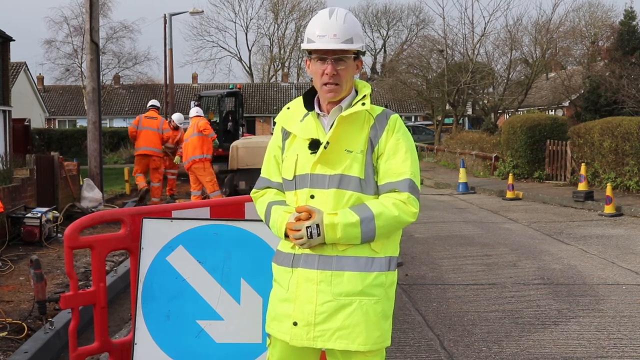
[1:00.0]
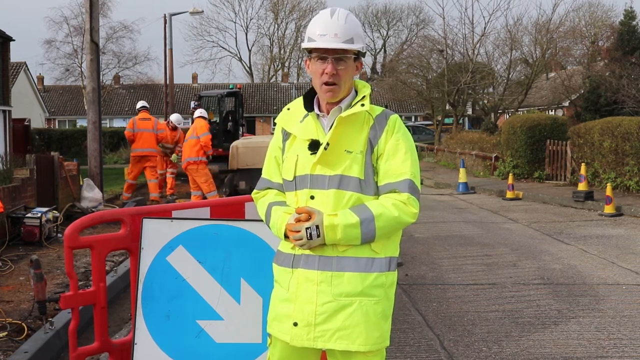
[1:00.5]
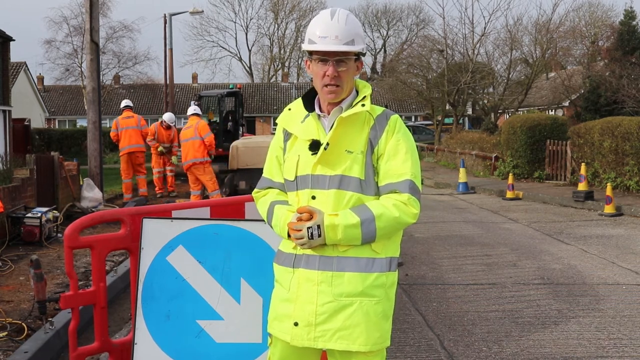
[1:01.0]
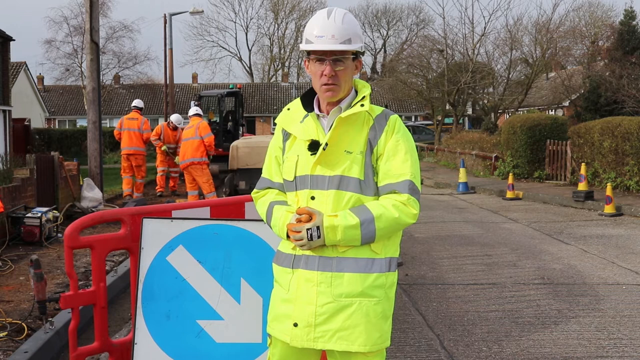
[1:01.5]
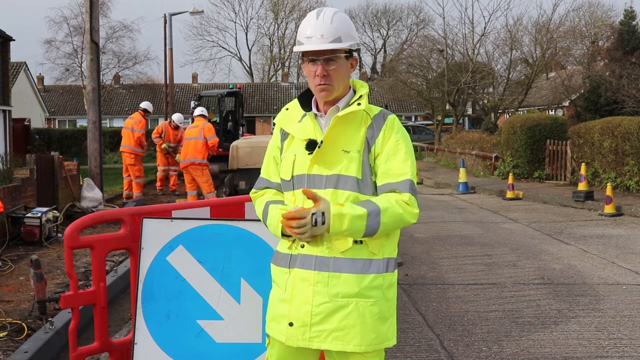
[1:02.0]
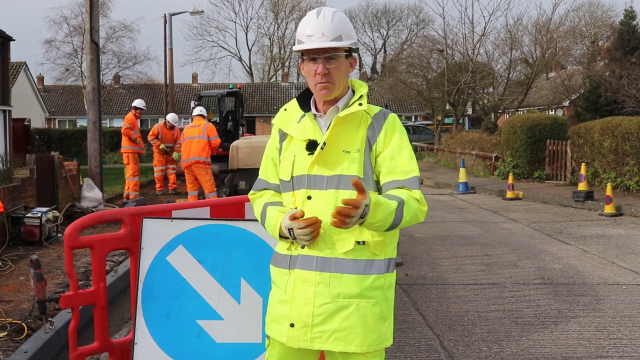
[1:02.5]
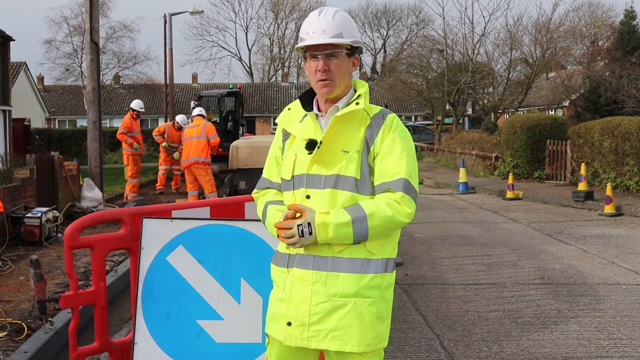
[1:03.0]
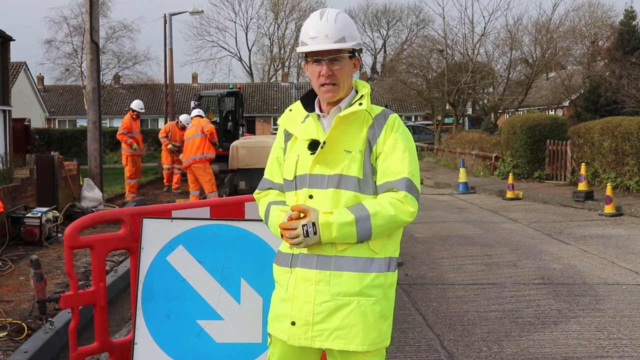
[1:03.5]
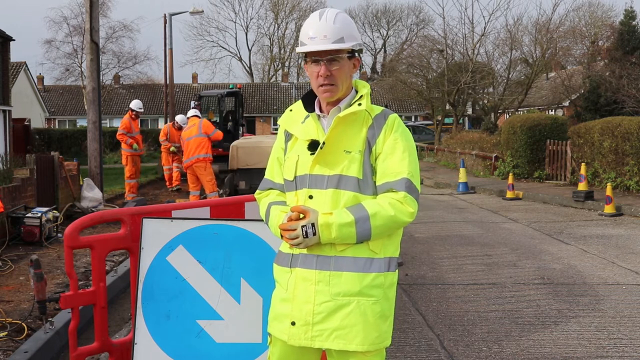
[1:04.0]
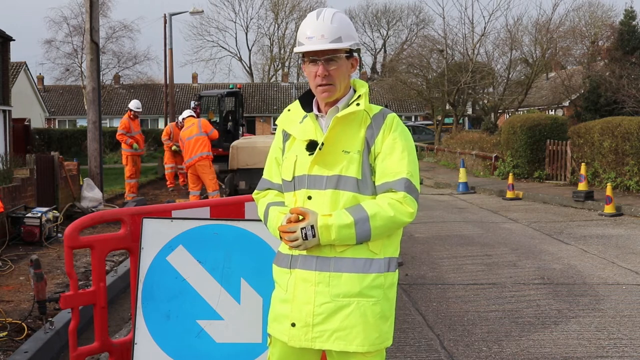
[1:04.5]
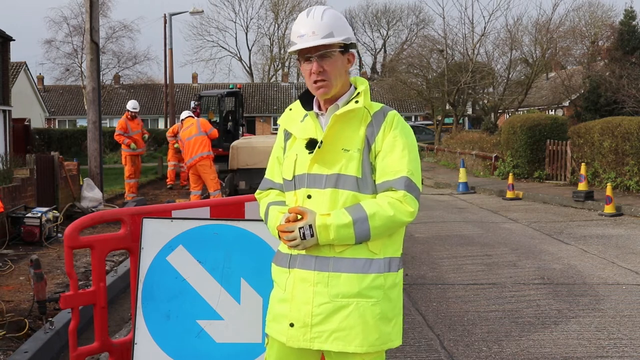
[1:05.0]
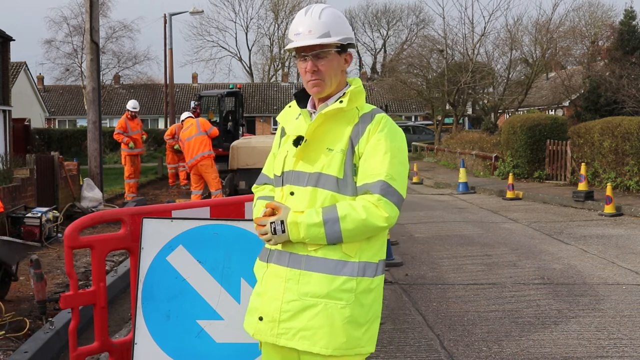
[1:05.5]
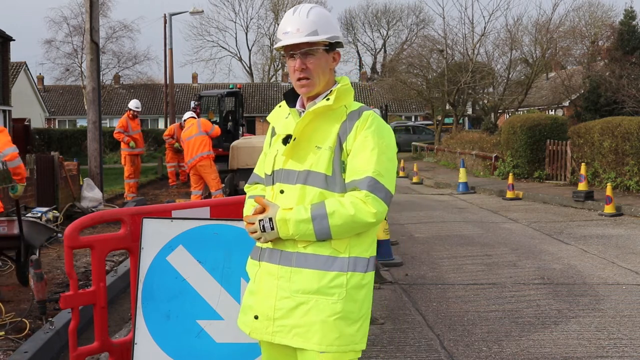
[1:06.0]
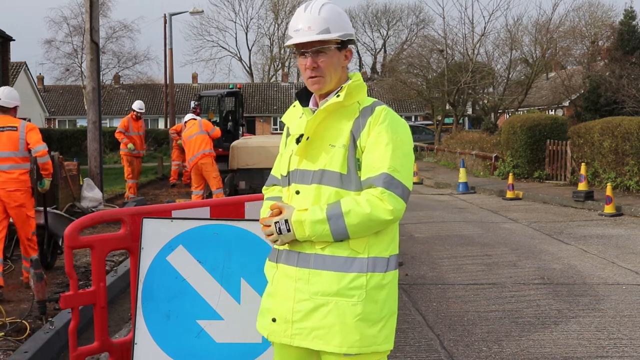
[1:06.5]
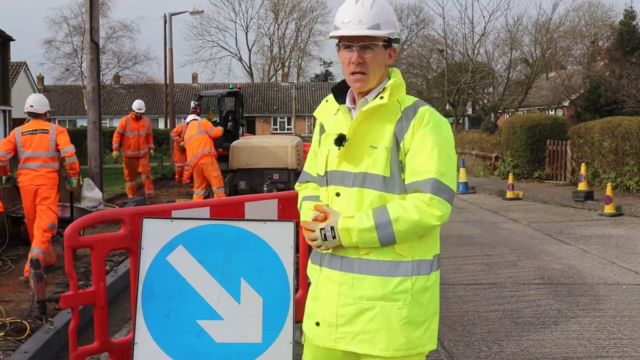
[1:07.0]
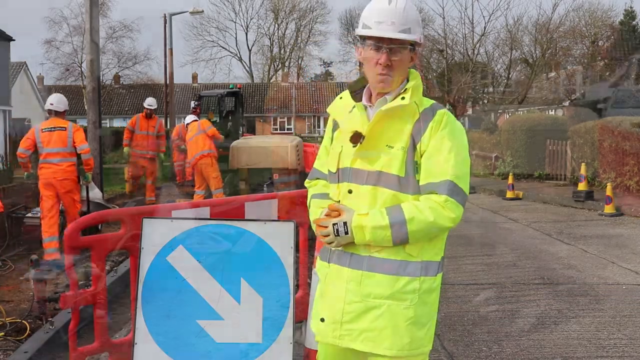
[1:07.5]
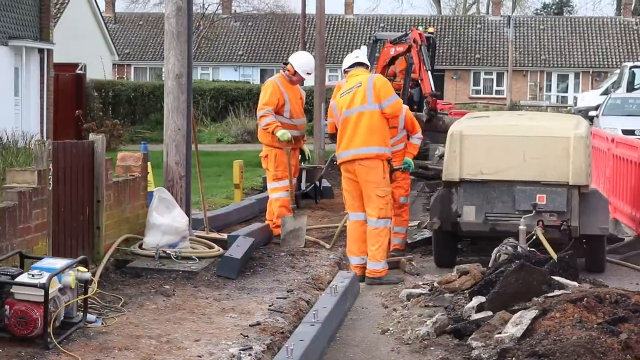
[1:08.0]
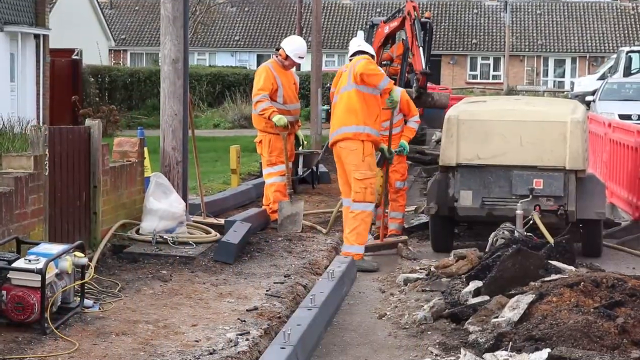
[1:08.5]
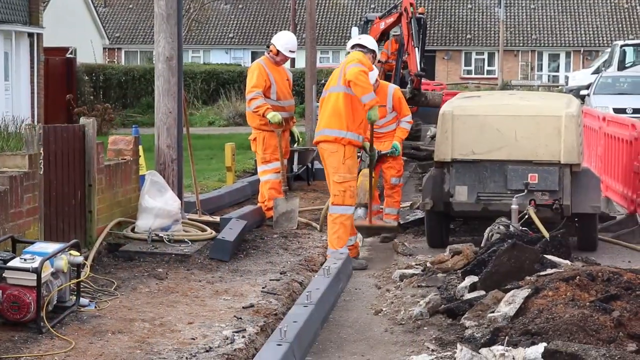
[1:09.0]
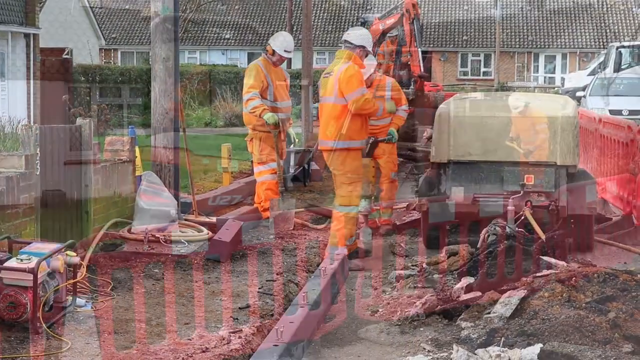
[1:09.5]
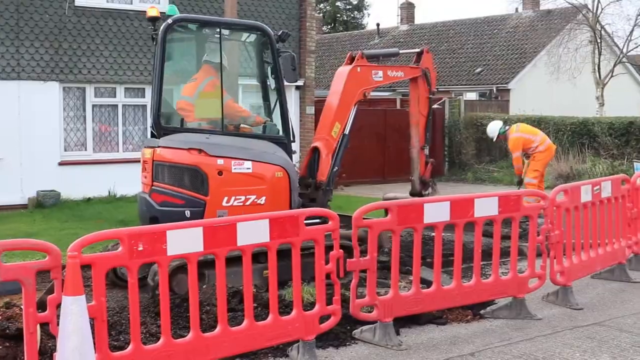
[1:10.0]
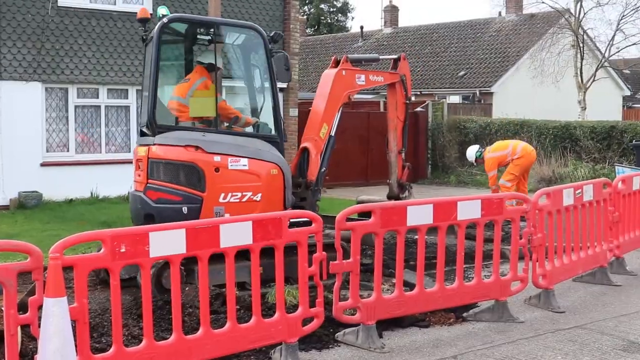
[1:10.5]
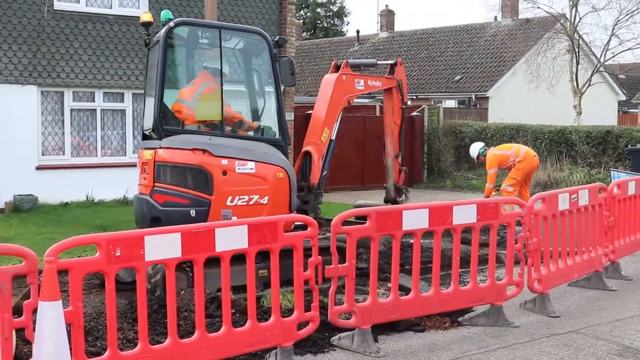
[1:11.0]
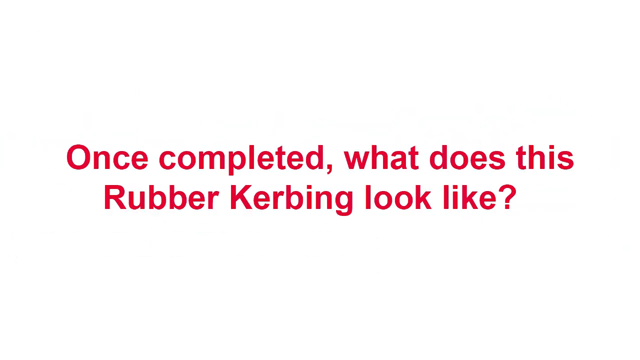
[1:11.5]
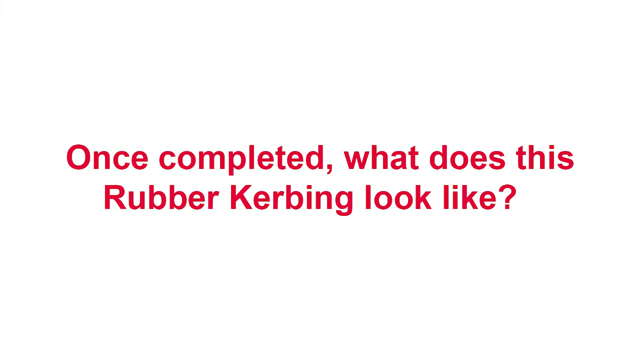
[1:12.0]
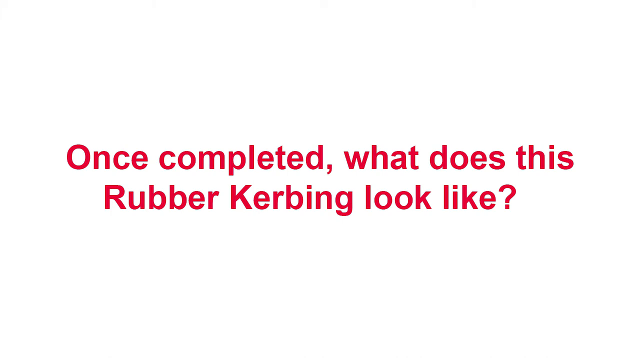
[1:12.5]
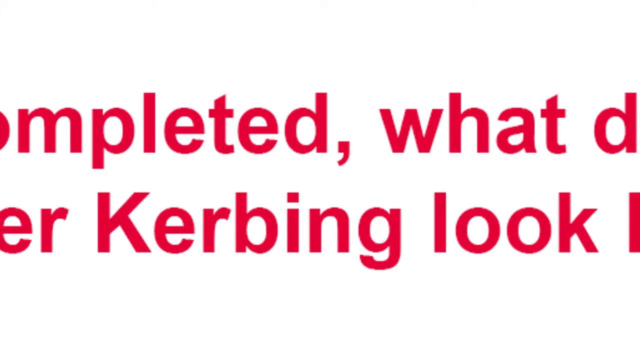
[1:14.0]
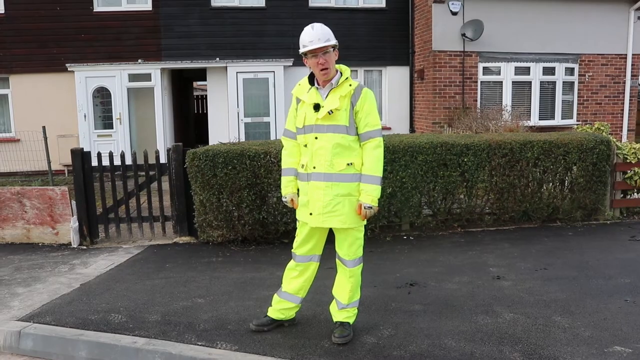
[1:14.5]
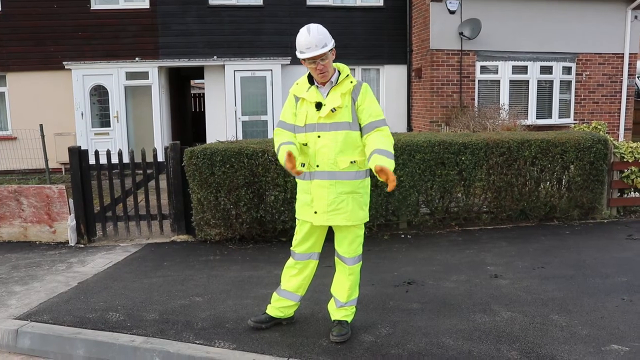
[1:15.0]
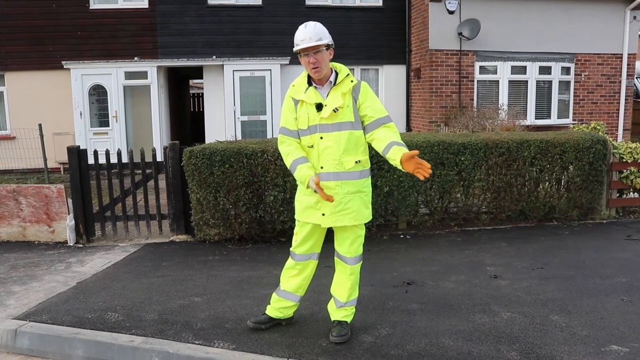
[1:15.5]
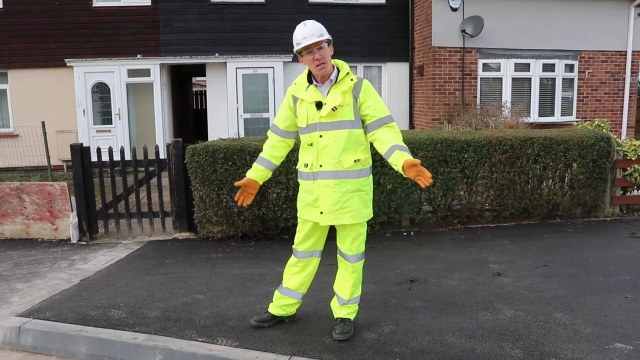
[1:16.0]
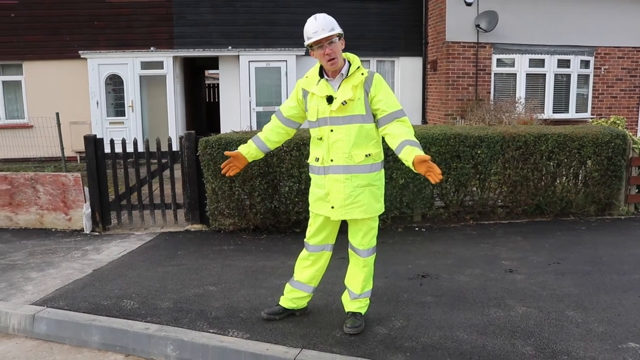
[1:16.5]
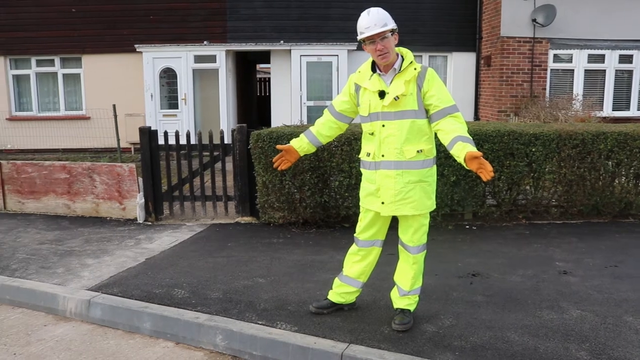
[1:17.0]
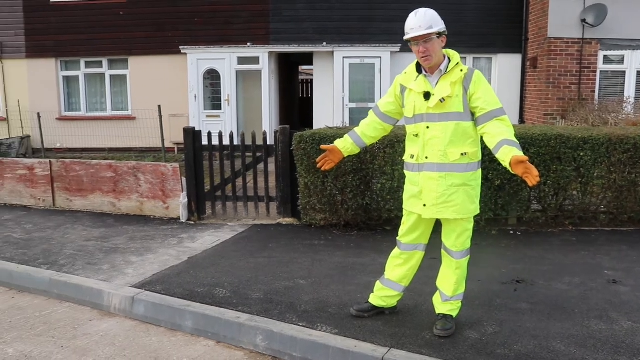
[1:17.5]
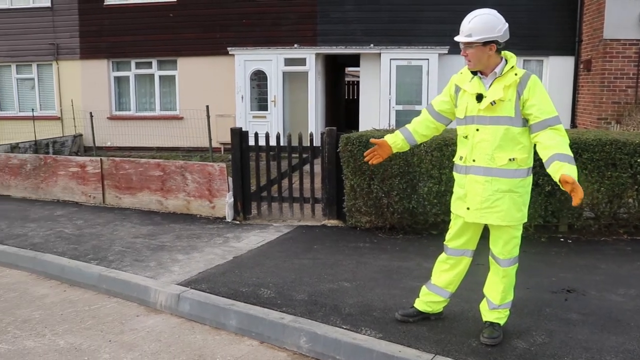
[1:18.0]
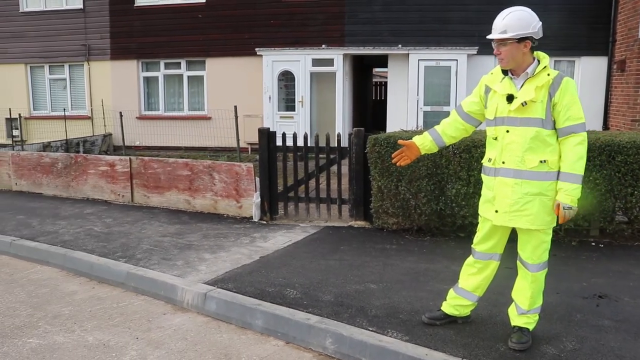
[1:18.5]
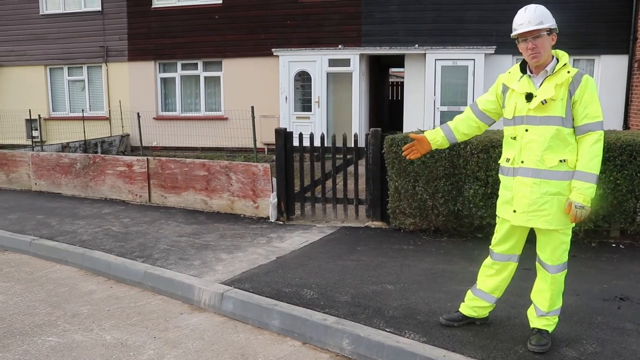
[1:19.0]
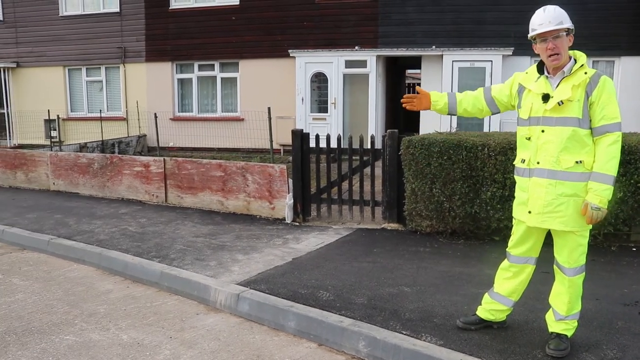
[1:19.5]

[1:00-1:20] The counselor speaks with his hands together, then gestures toward the camera with his left hand. His gloves are white with black patches like logos, and the fingertips are yellow. The setting appears to be a residential neighborhood, with houses in the background. To the counselor's right, someone is using a wheelbarrow. Scenes show the workers, including someone using a broom, and a red barrier that looks plastic and has bars on it. A title card in red letters on a white background reads "Once completed, what does the rubber kerbing look like?" The counselor then stands on the completed kerbing, in front of what looks like a residential house, gesturing with his hands at the kerbing as the camera pans leftward.